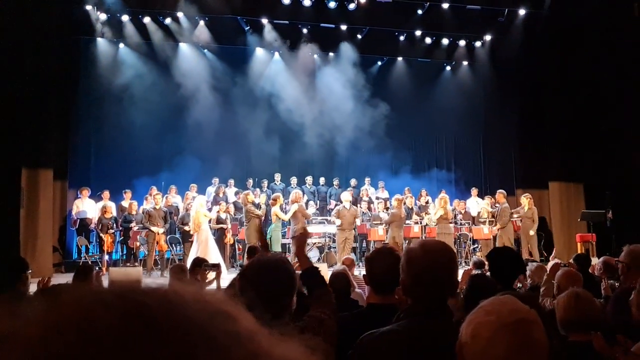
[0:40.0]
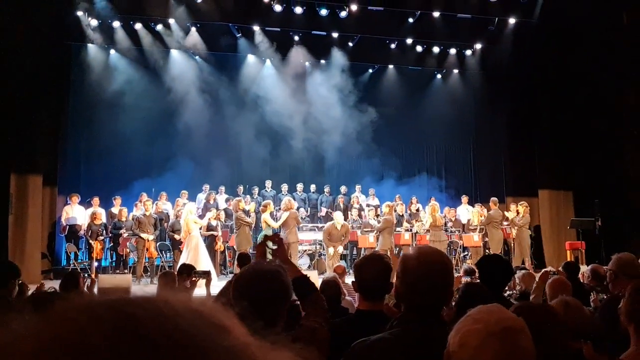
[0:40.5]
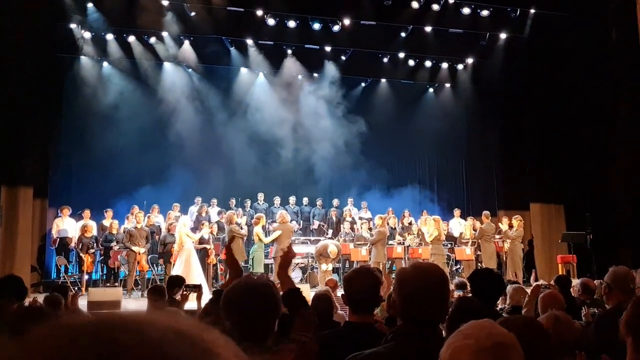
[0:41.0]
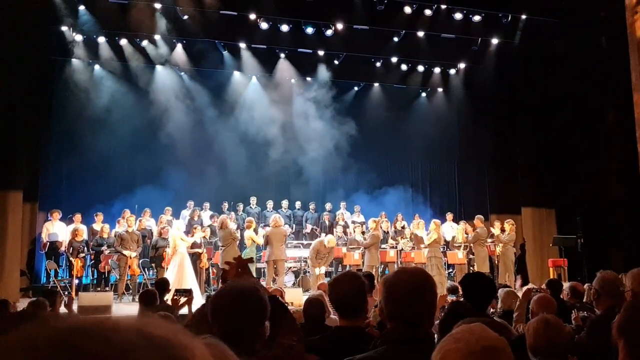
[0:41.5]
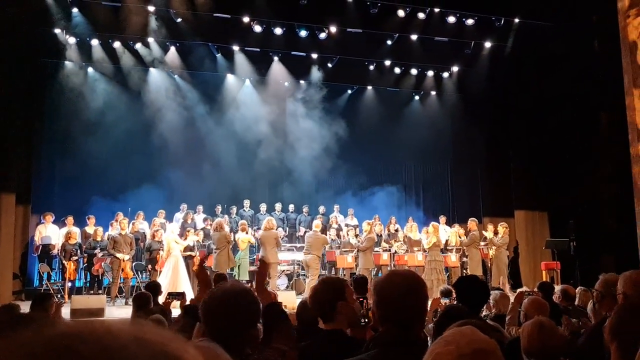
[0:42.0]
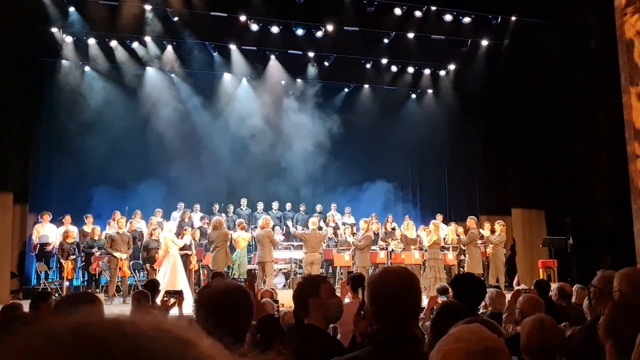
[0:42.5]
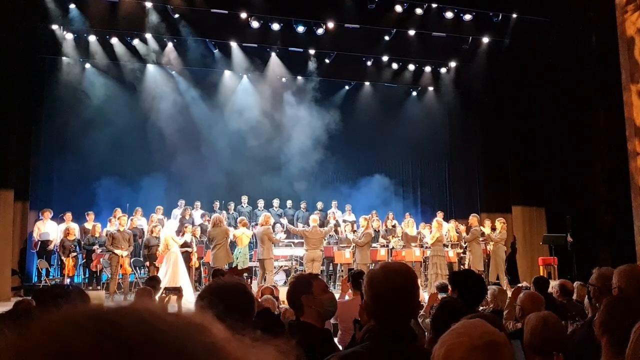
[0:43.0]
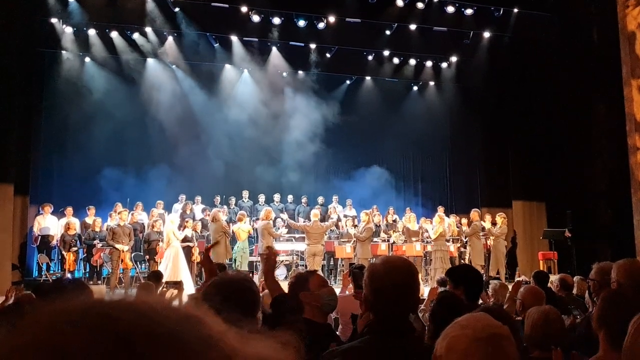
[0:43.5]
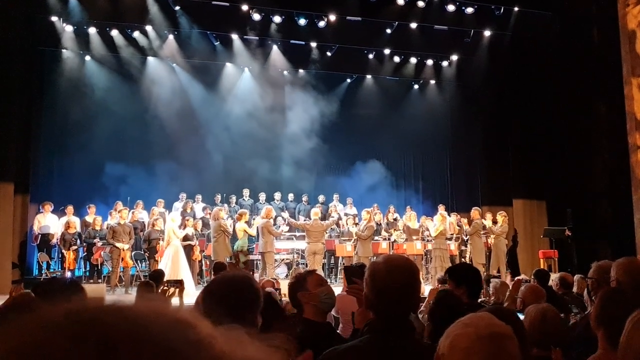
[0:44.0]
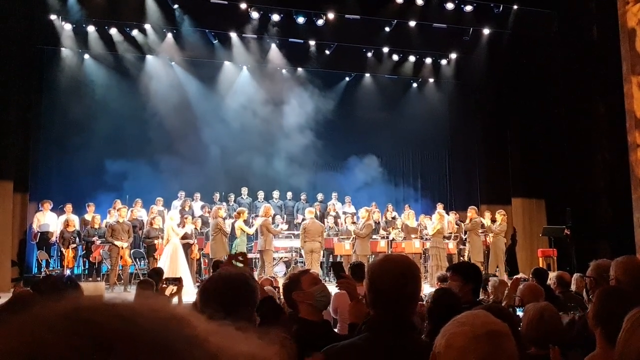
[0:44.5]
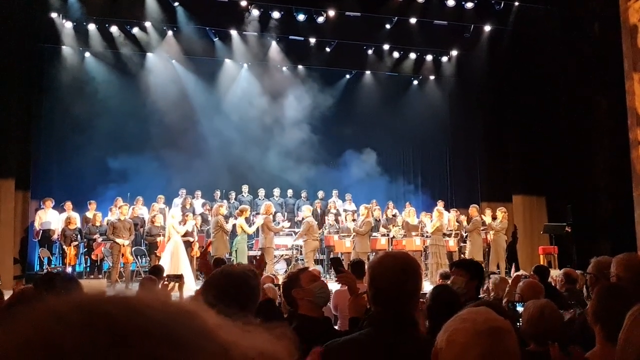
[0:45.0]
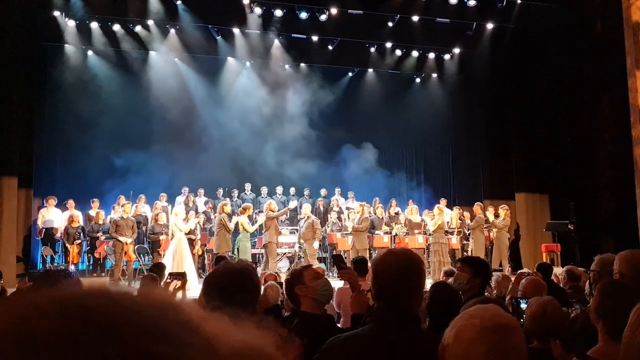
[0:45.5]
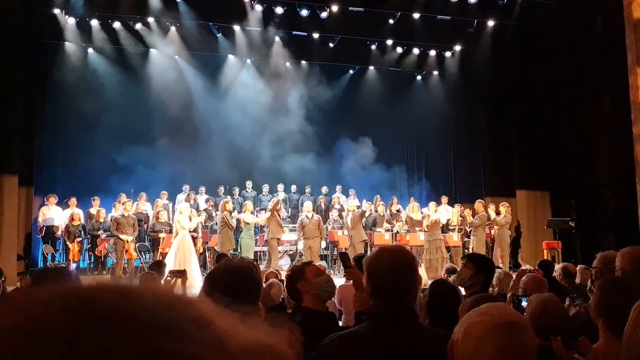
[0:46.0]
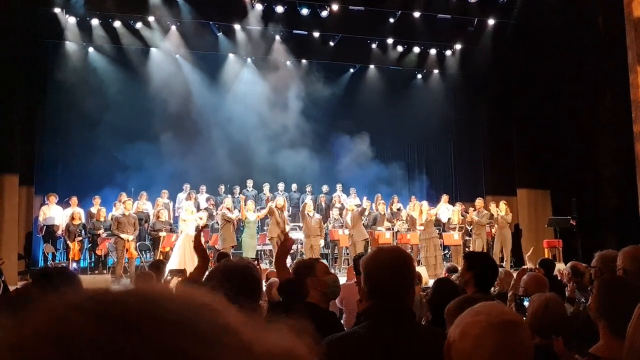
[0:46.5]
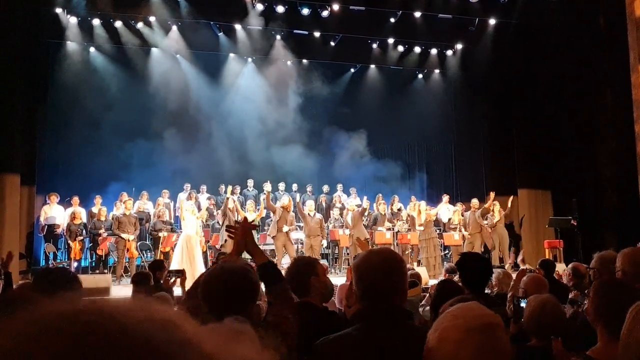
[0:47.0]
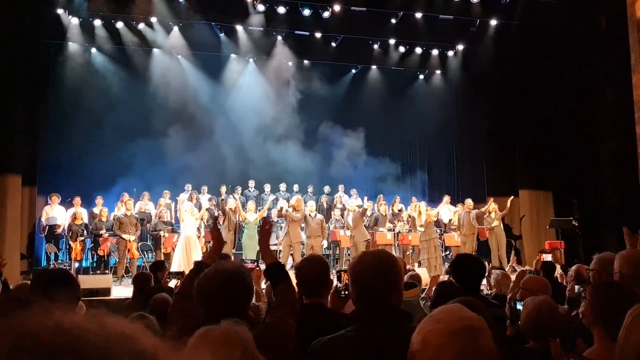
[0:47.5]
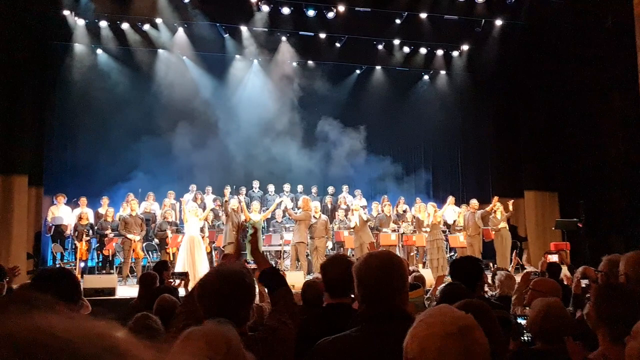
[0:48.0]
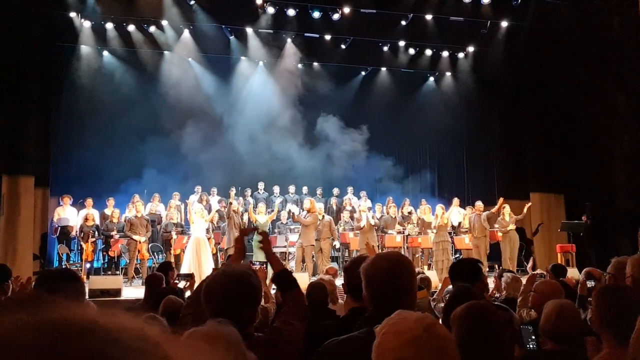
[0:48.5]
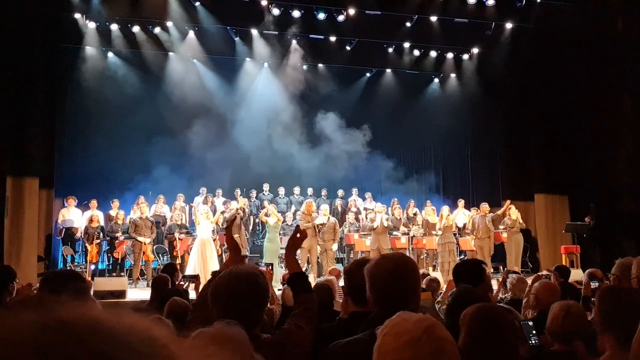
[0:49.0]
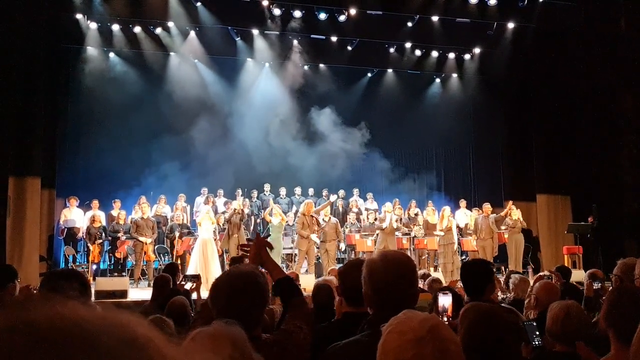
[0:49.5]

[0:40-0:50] More people are being recognized. The group at the front turns toward the other musicians, and the choir members, the stringed instruments and the other musicians receive acknowledgment. The audience is clapping. There are lights and smoke on the stage. The crowd appears to be a mixed group, probably skewing older.